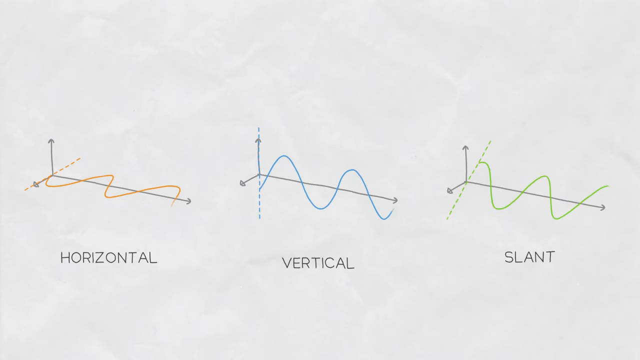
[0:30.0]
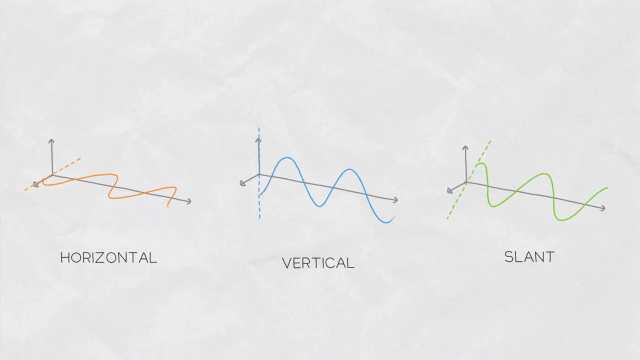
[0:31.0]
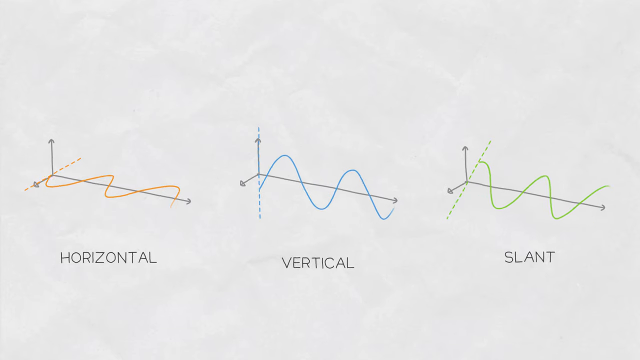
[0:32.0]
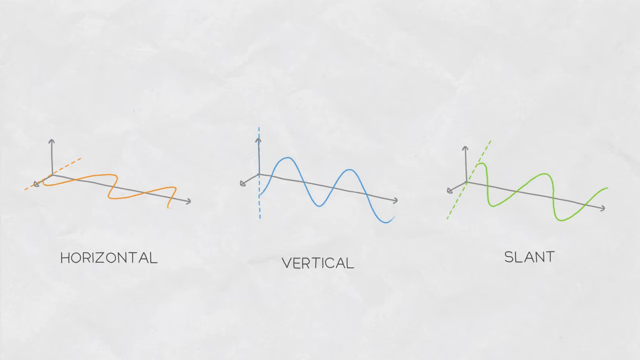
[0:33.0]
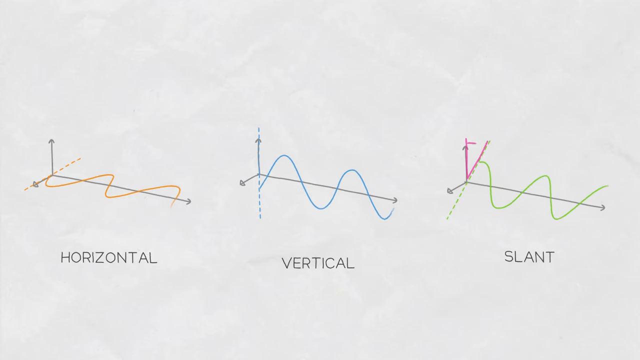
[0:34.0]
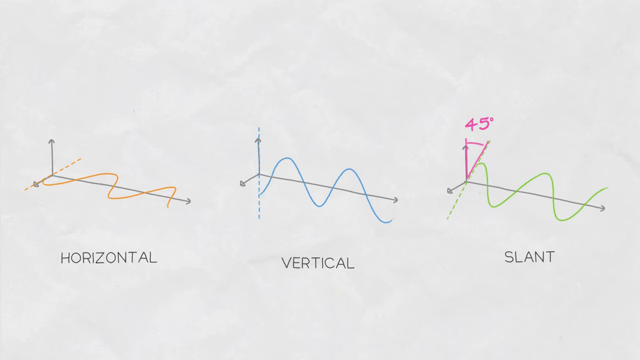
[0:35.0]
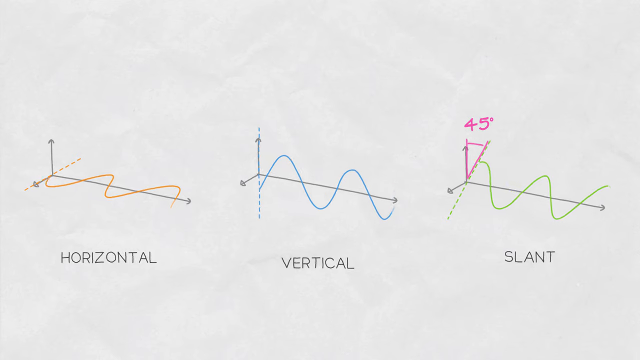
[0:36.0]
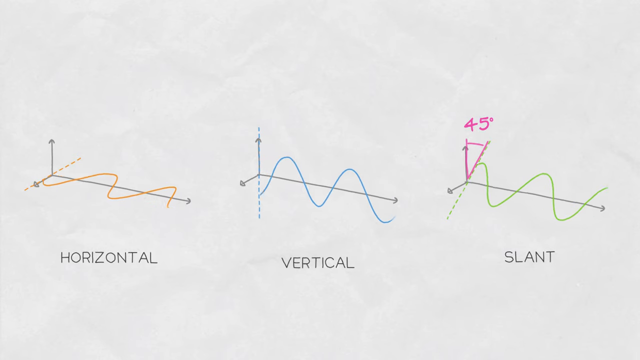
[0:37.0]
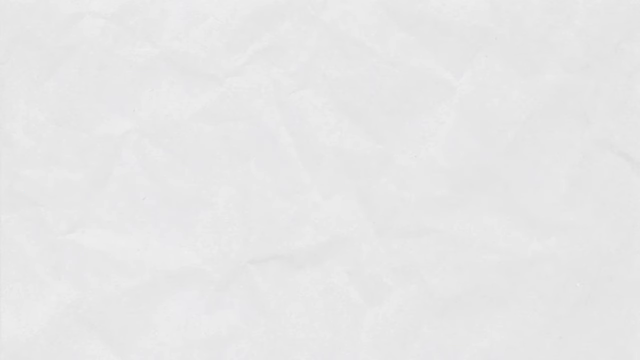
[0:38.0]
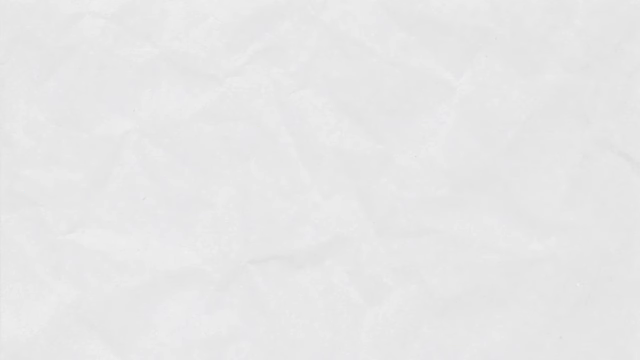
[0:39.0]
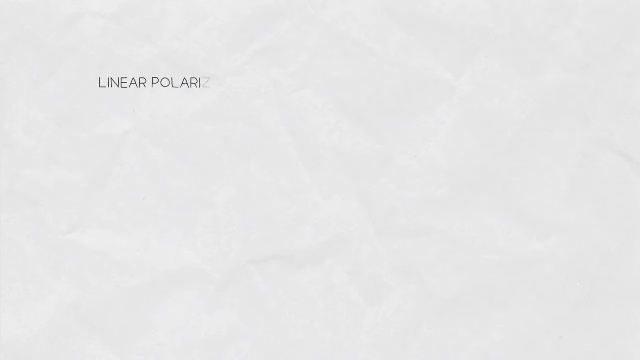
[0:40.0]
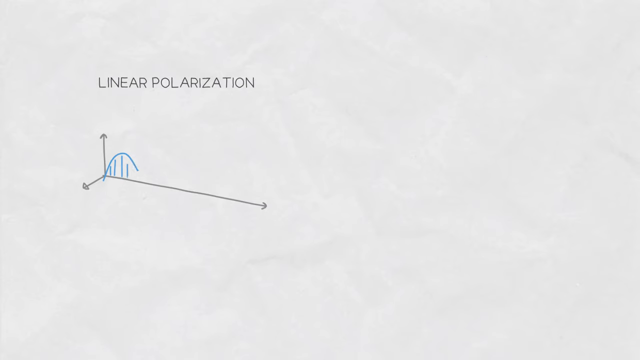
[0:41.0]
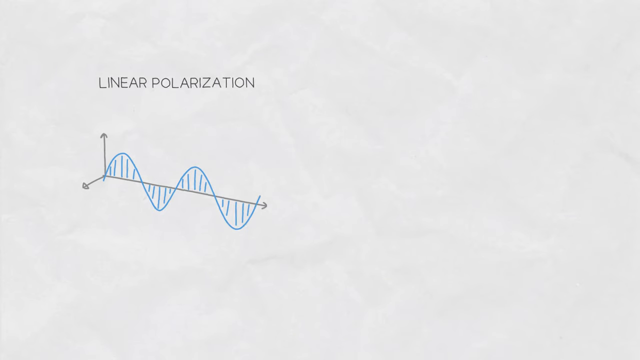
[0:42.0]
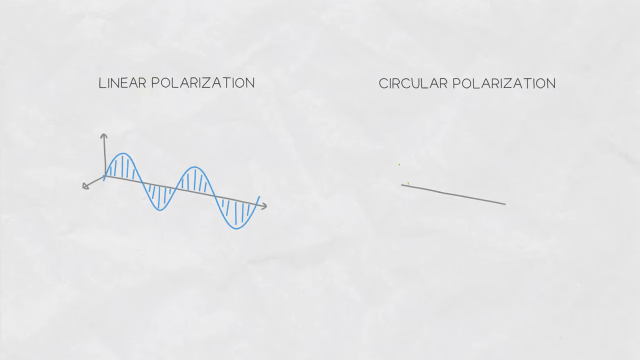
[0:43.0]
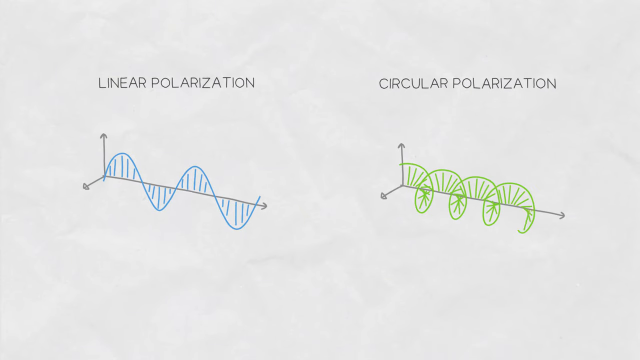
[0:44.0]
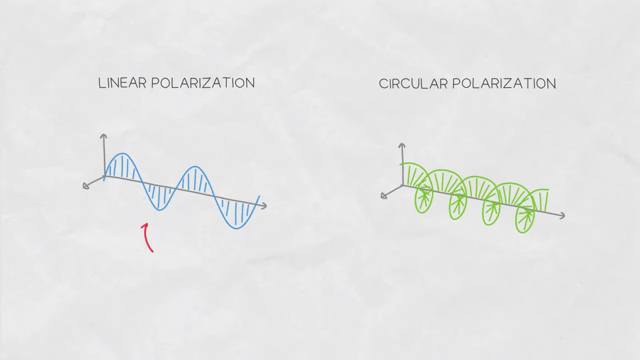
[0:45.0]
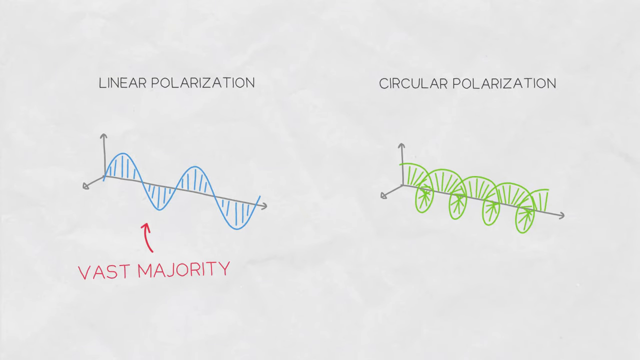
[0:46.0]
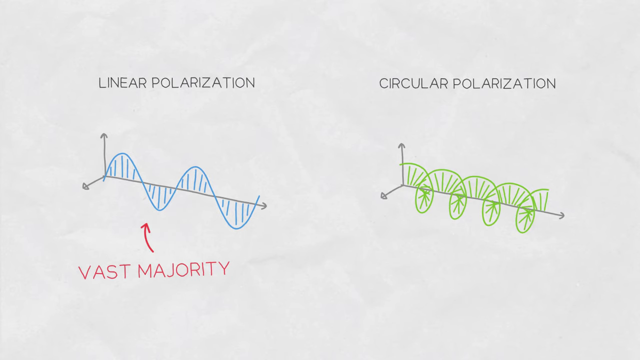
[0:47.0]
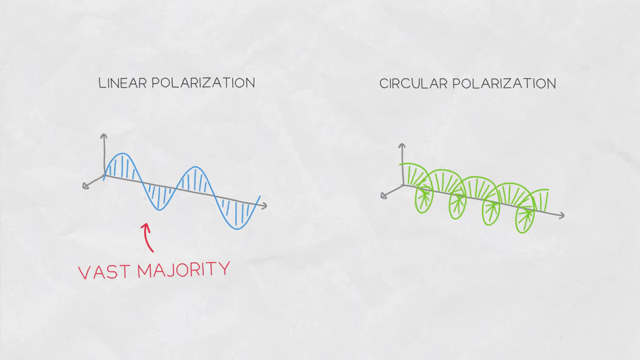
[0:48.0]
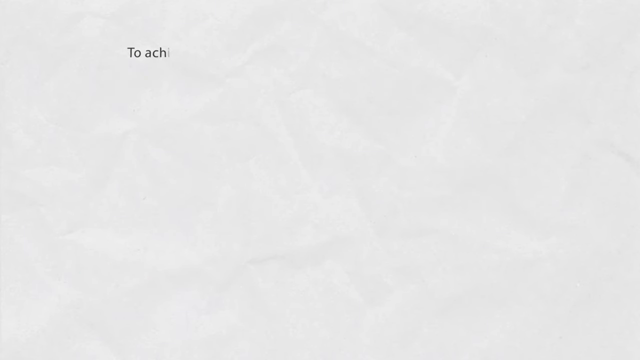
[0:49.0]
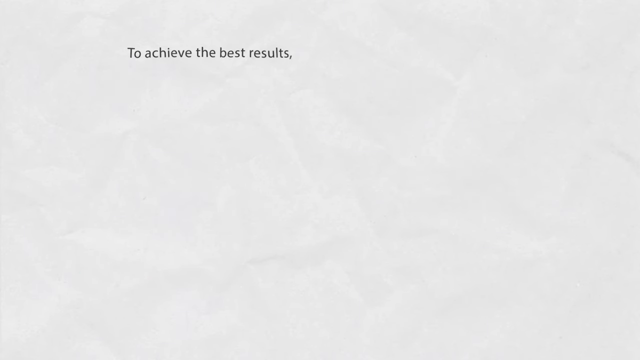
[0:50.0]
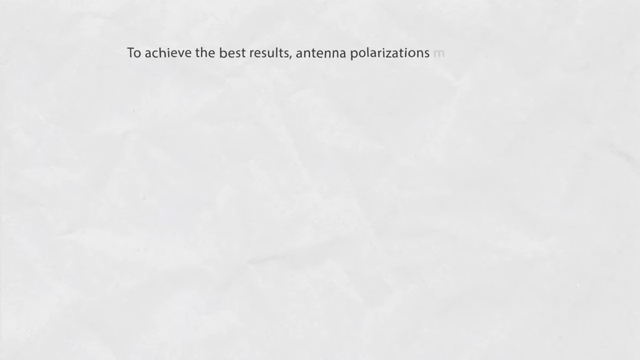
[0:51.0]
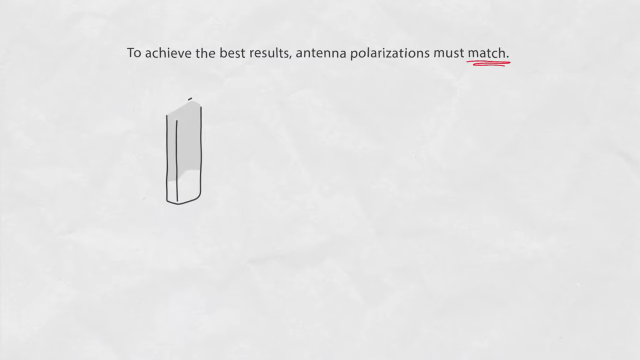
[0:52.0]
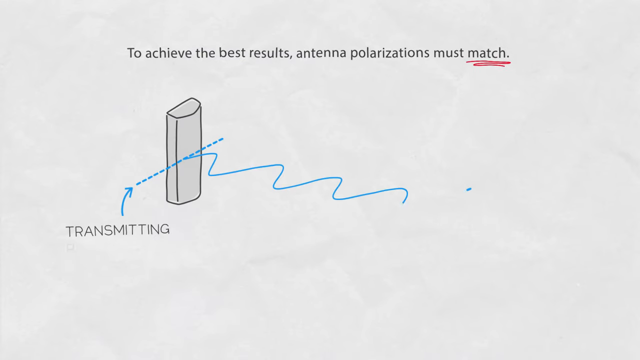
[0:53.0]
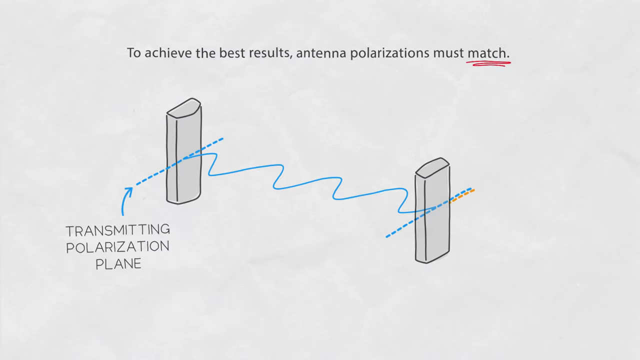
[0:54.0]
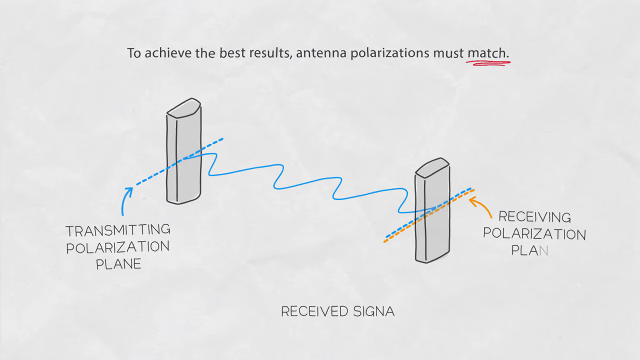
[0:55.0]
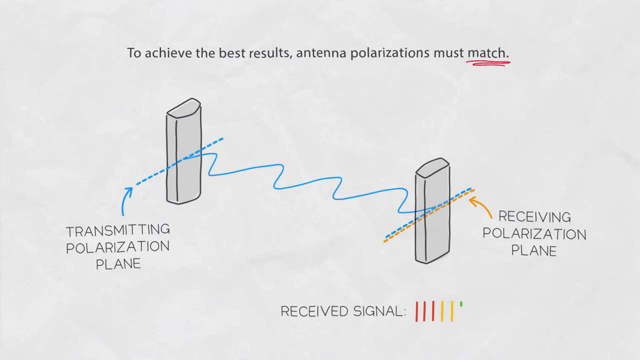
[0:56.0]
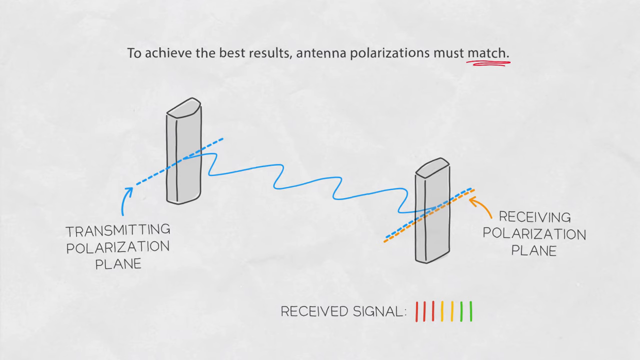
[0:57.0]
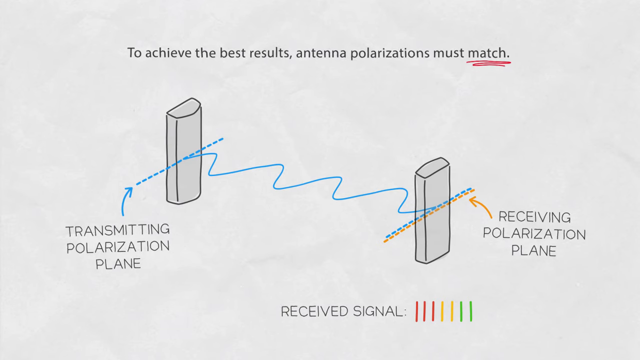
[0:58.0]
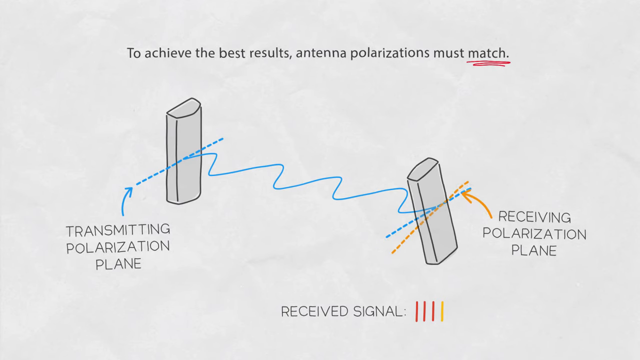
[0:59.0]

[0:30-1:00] The horizontal, vertical and slanted lines make some movements; they are the same shape but in different orientations. Degrees are then written on the slanted one. Next, the words "linear polarization" appear with a diagram showing linear polarization, and there is a circular polarization with its diagram below. Beneath them is some text with an arrow pointing at the linear polarization. A statement then appears reading "To achieve the best results antenna polarizations must match," followed by a diagram illustrating it, labeled "transmitting polarization plane," "received signal" and "receiving polarization plane."